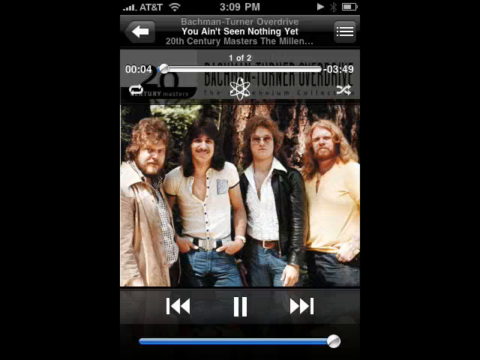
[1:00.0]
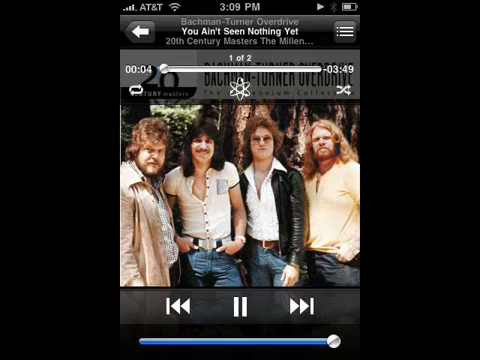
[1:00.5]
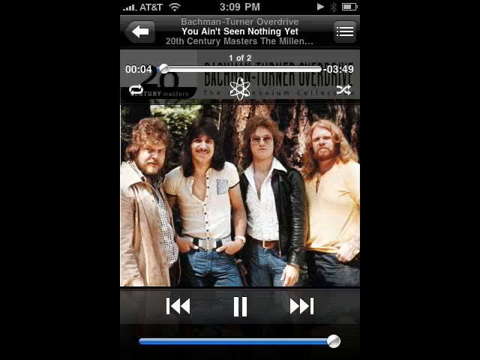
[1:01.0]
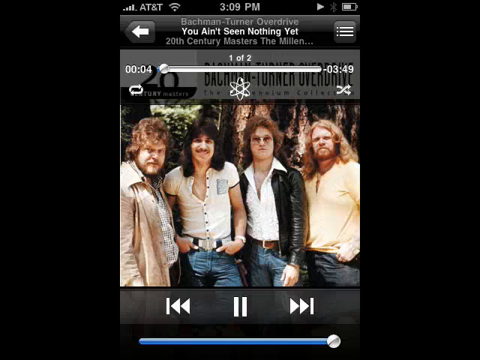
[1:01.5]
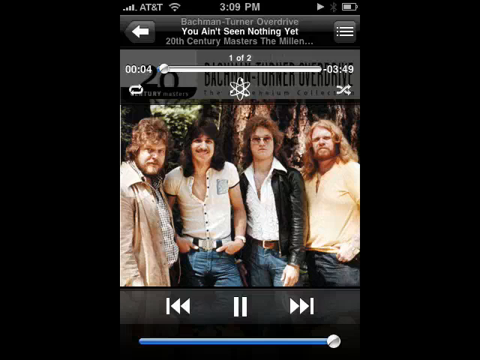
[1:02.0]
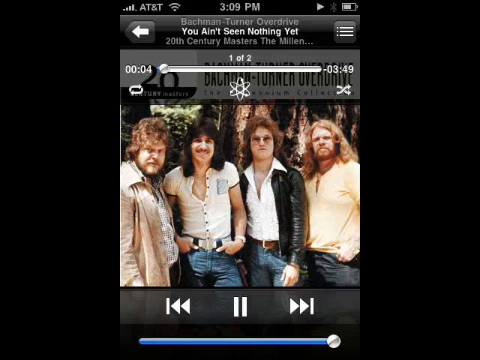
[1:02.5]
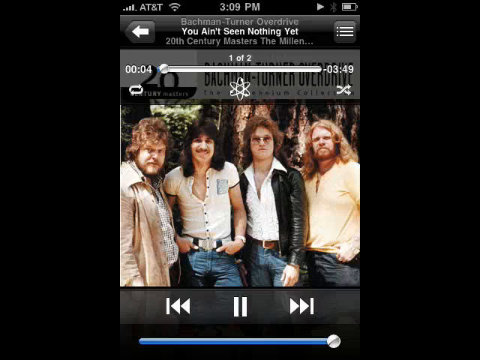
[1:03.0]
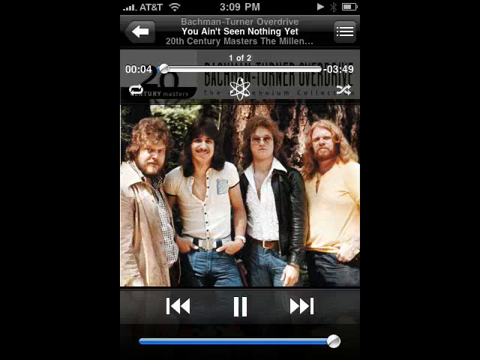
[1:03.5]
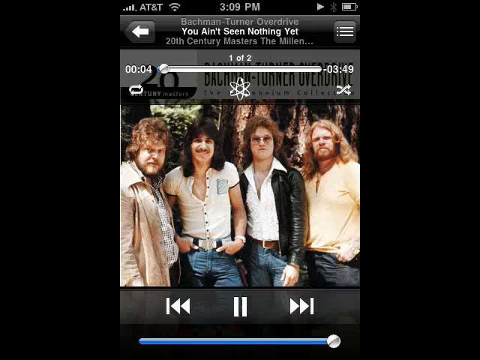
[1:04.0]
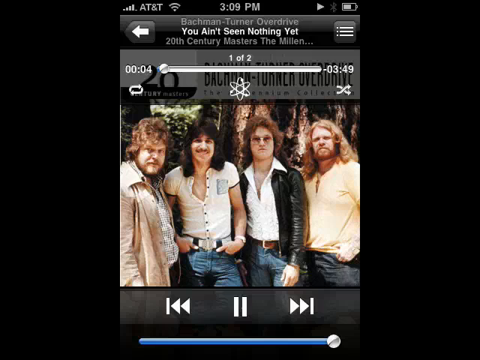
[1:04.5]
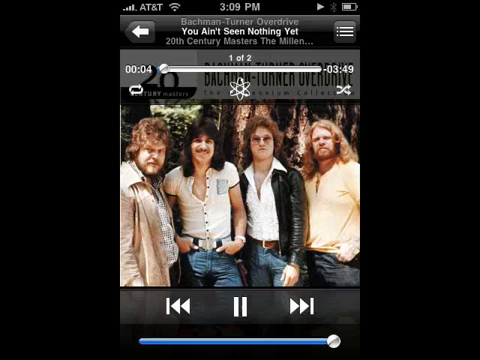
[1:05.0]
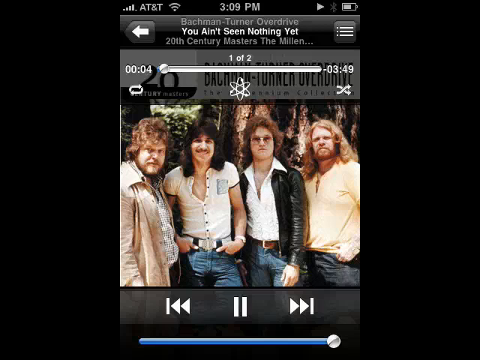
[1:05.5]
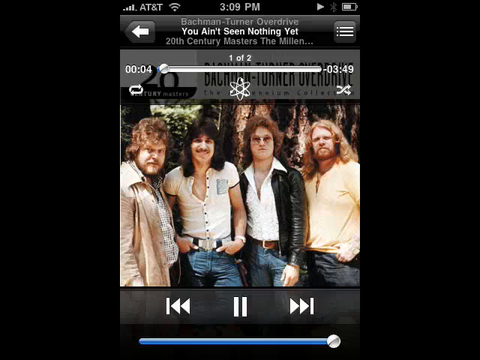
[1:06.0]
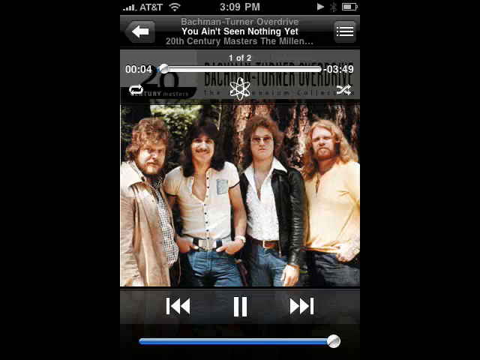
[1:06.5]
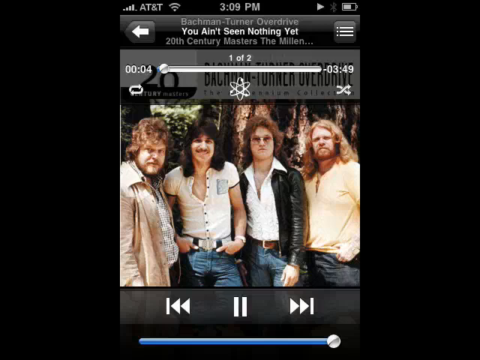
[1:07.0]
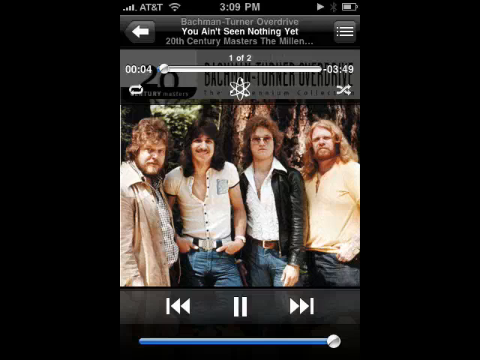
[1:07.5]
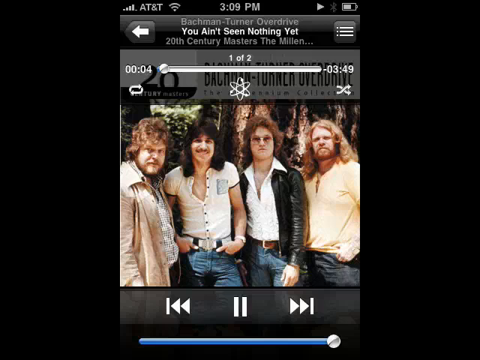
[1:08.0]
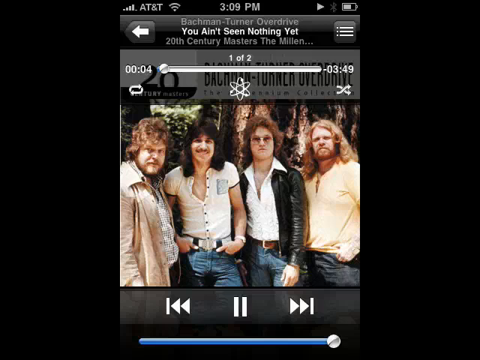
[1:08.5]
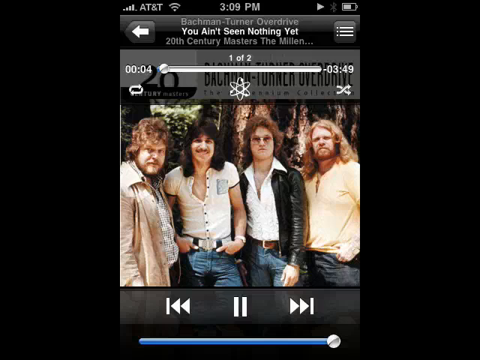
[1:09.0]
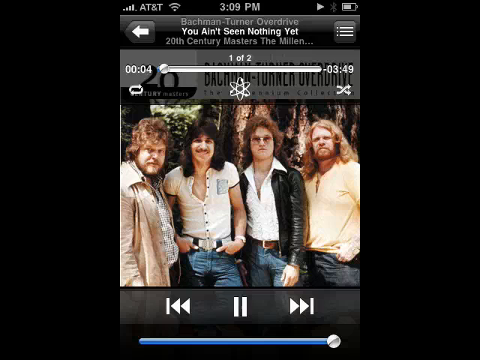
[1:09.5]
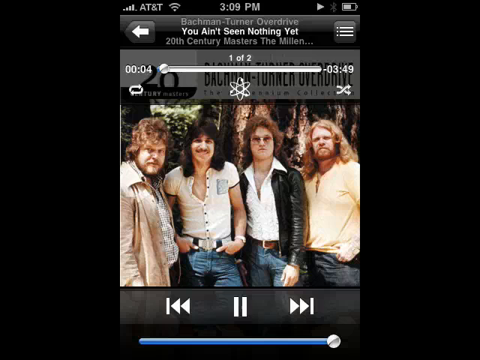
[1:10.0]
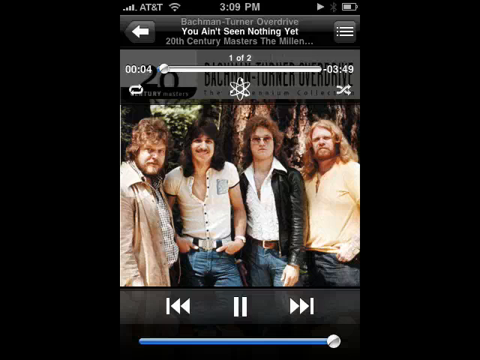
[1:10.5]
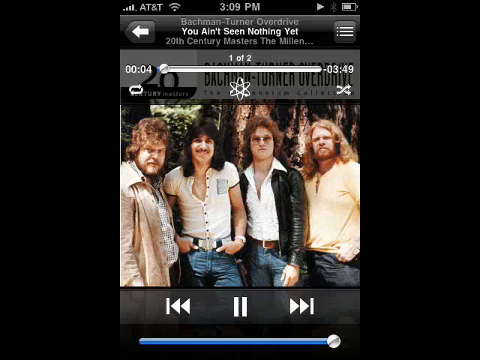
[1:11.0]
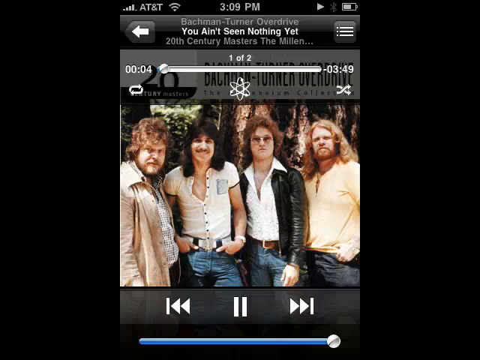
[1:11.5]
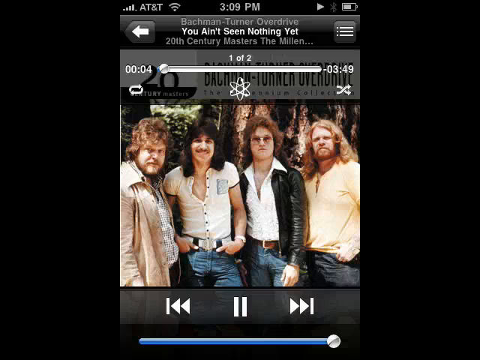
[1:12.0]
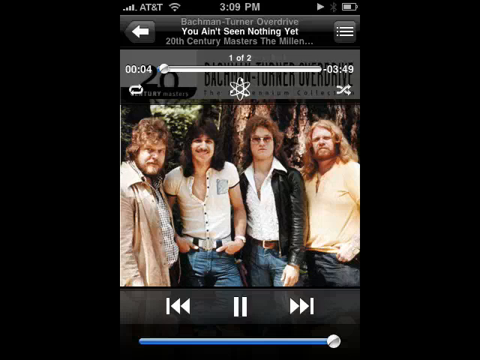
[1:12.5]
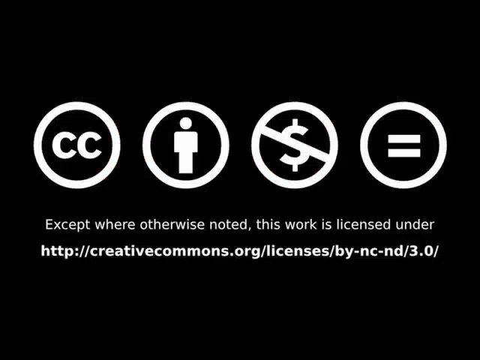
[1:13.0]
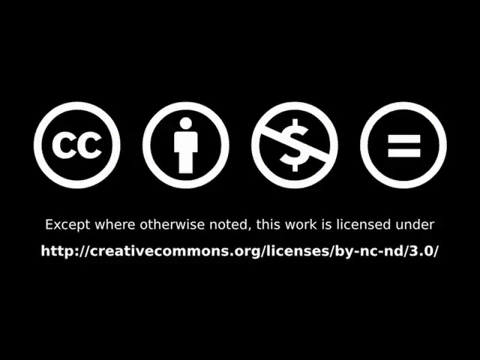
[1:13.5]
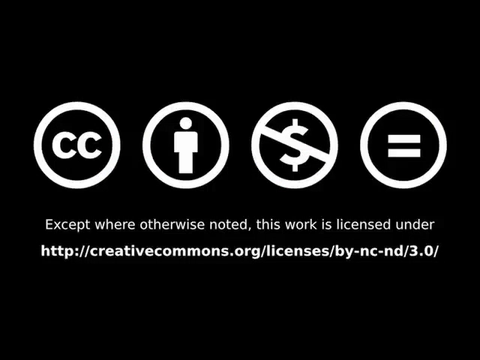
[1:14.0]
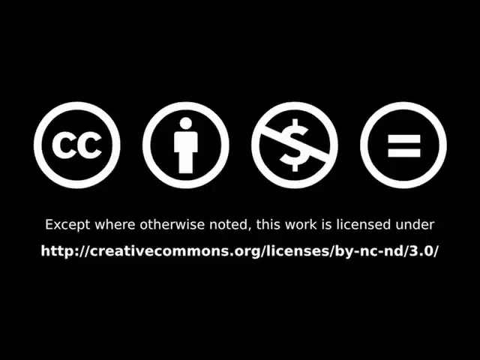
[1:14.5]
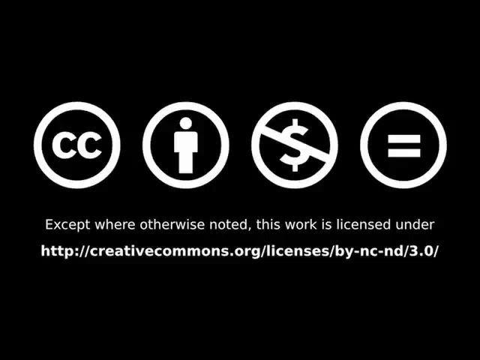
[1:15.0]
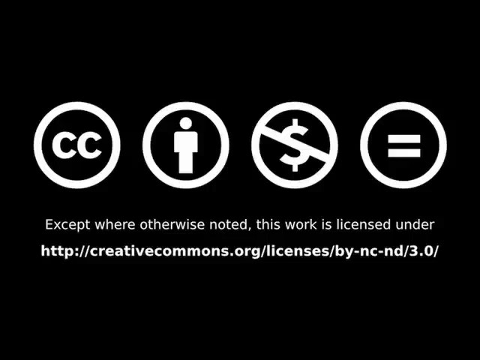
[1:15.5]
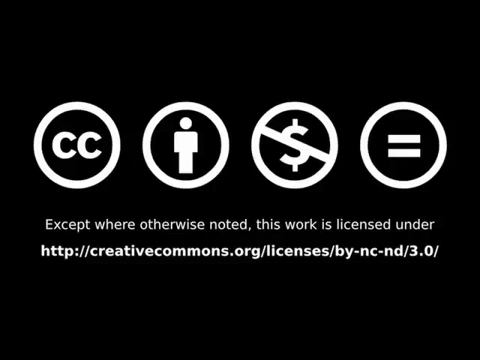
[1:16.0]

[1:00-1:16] A math problem with its solutions is shown and labeled difficult. Then a MagicPro book or software package from Cisco appears next to the word "easy". Next comes a Butterscotch tutorial on how to use voice control on an iPhone 3G. A man then comes in and demonstrates voice control: he presses a button on the iPhone 3G, the voice control greets him, and he begins interacting with it. Toward the end, the video is shown to be marketing voice control on the iPhone 3GS, and the targeted market is also shown.